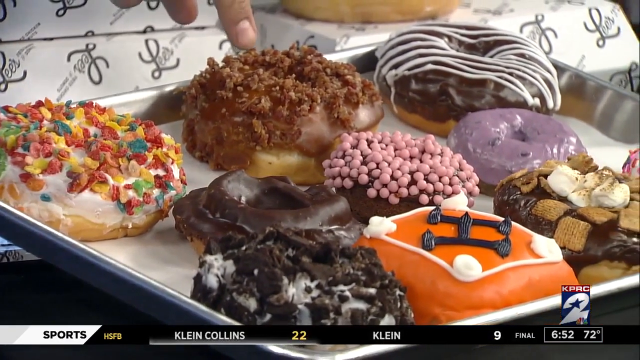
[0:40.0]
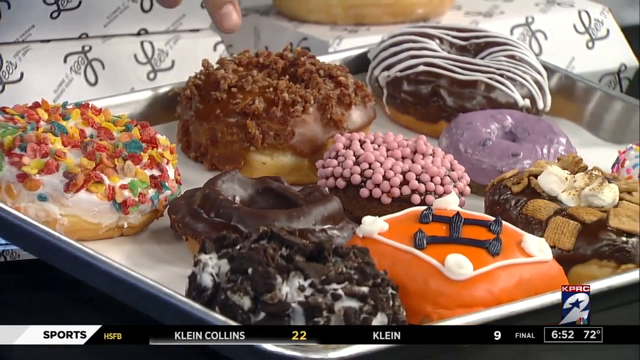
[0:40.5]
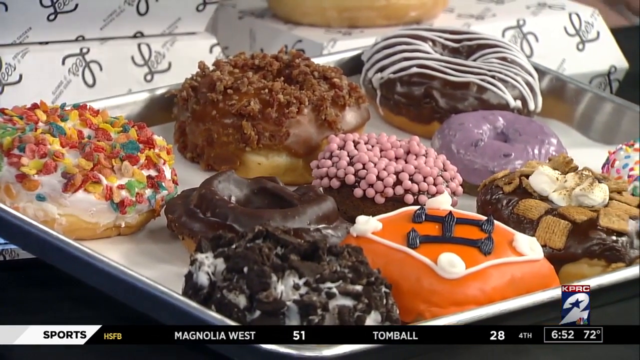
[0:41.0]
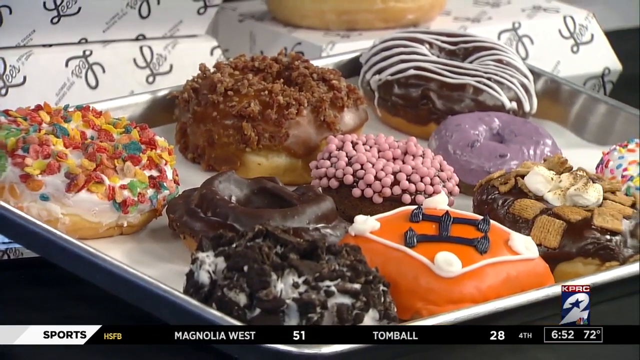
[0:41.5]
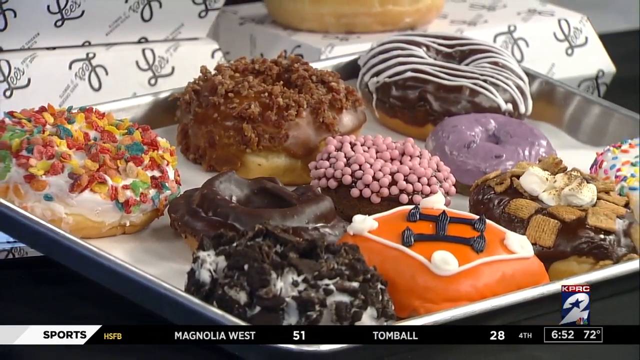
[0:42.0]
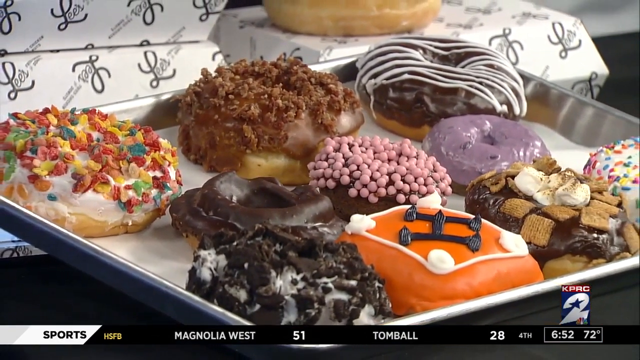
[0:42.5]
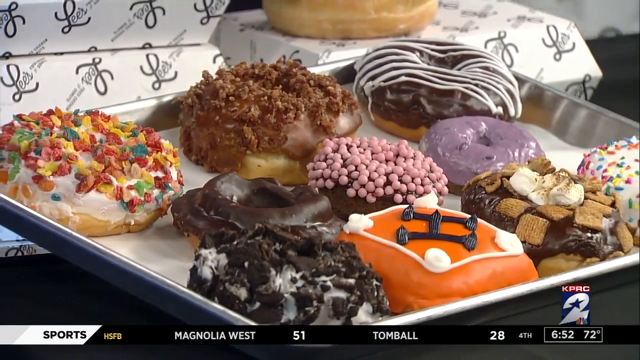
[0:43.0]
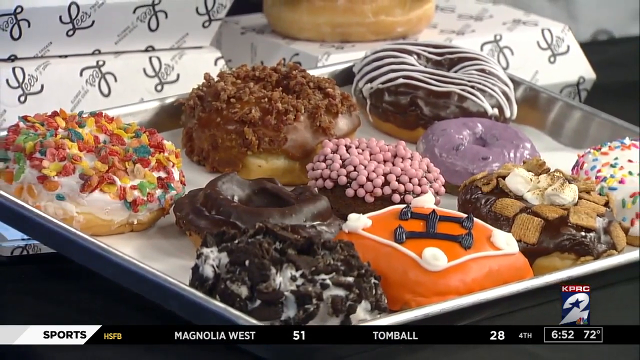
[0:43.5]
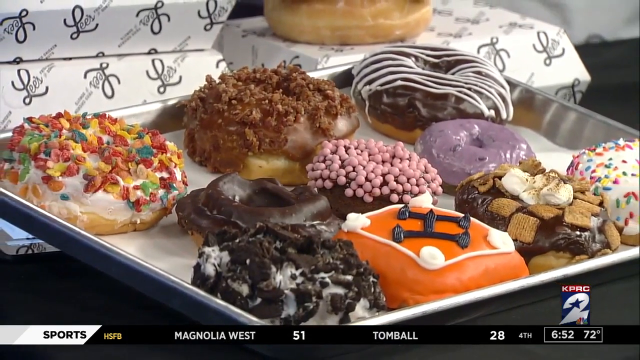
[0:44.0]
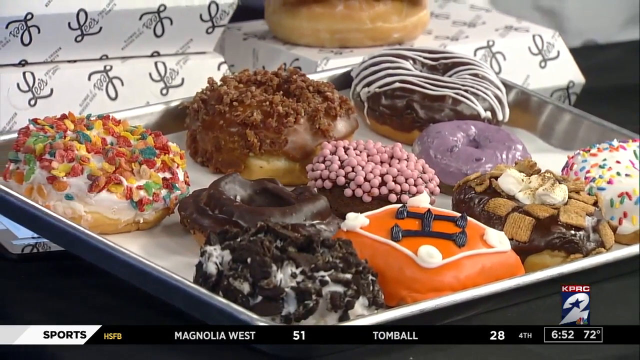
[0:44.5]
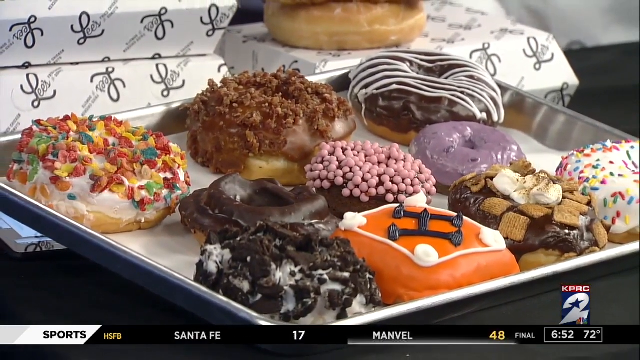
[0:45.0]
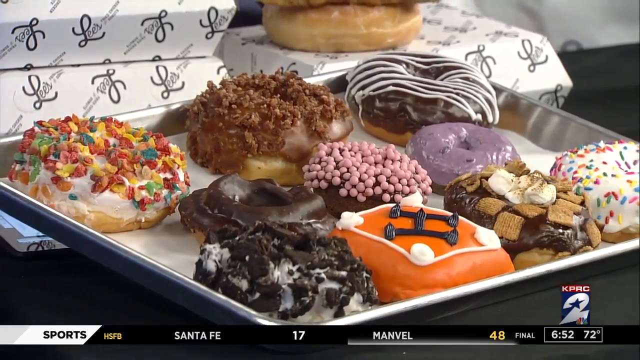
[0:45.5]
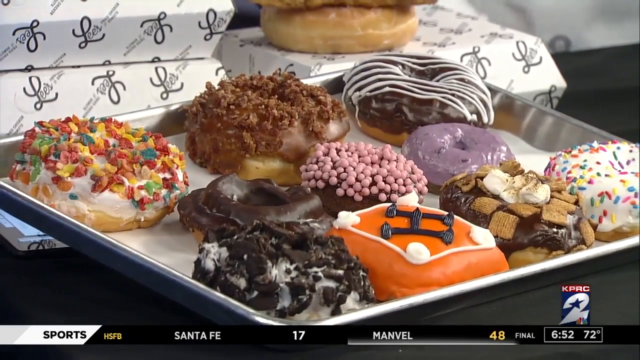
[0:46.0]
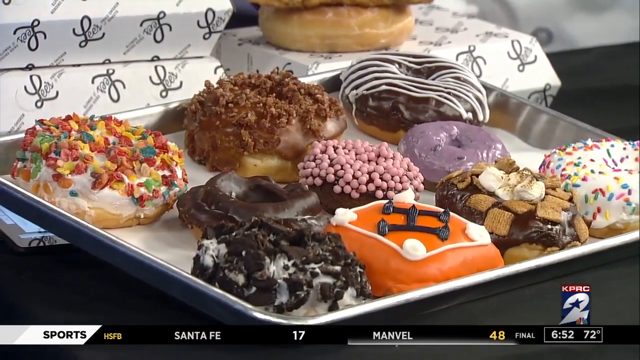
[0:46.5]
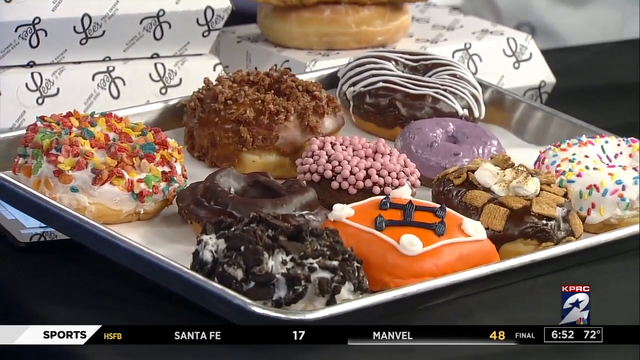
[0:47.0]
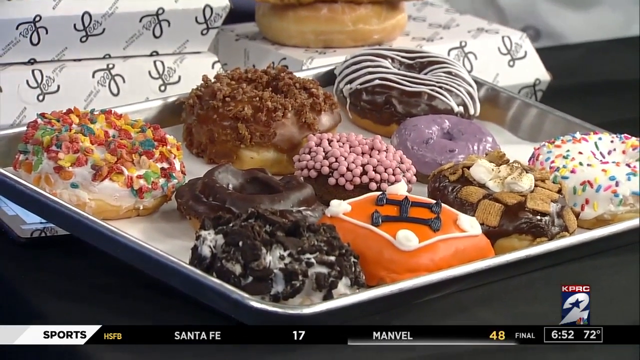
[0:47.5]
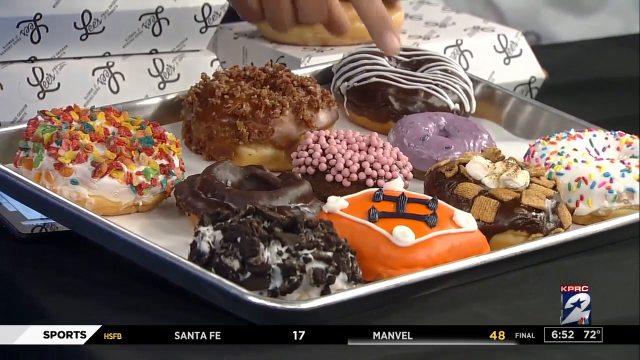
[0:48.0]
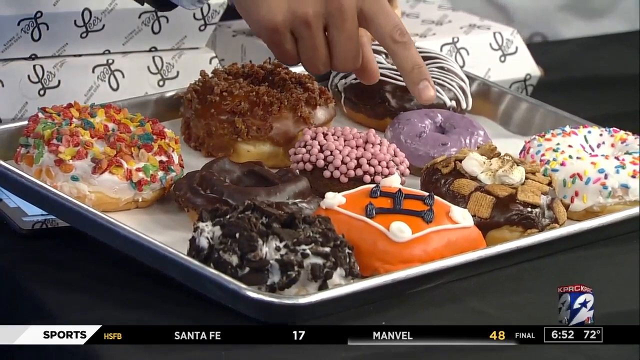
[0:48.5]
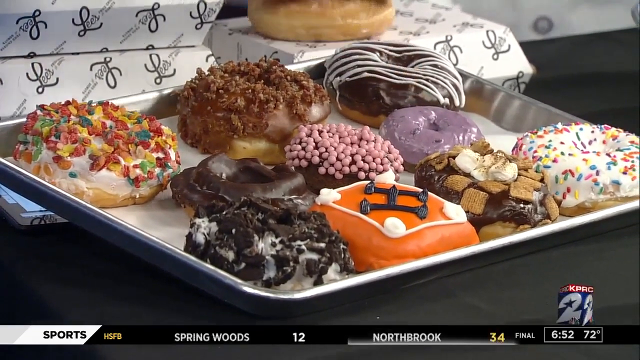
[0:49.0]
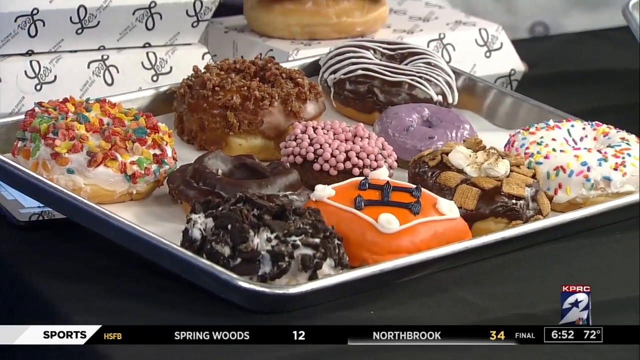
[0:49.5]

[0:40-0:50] On the KPRC2 talk show, a man in a black suit presents while a chef shows sweet donuts and the decorations on them. Different images show how she makes her donuts. Some are chocolate, some are decorated in bright colors, and some are decorated in purple.